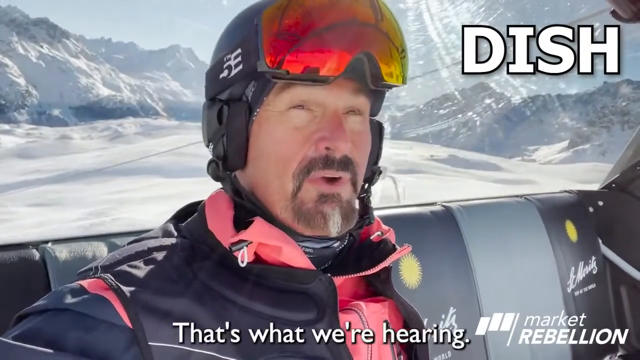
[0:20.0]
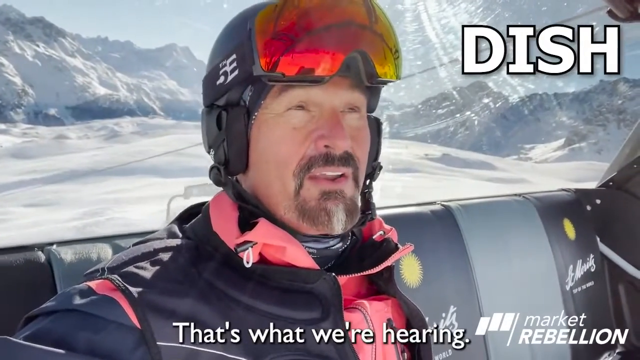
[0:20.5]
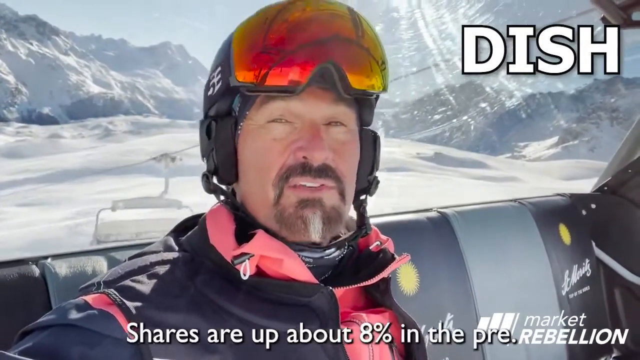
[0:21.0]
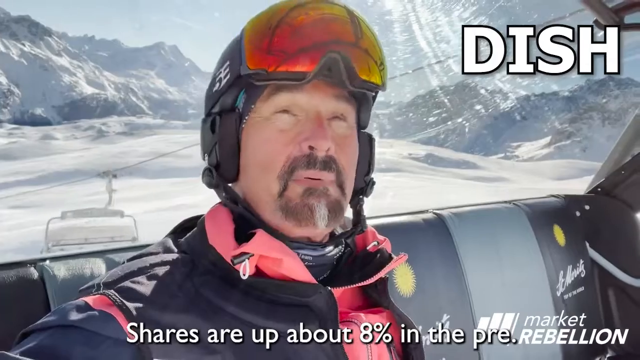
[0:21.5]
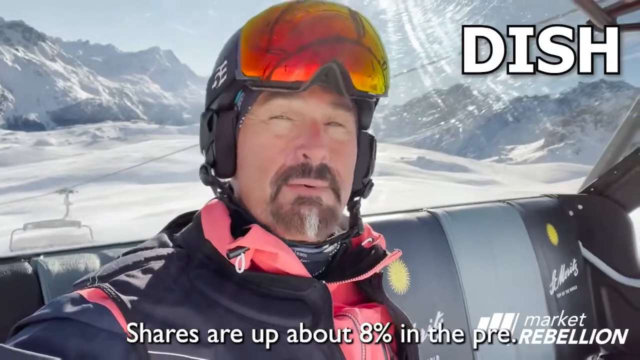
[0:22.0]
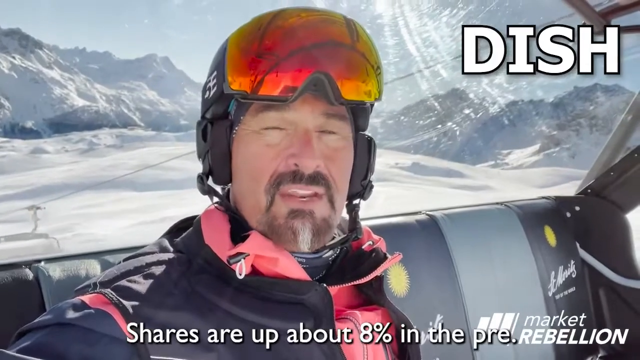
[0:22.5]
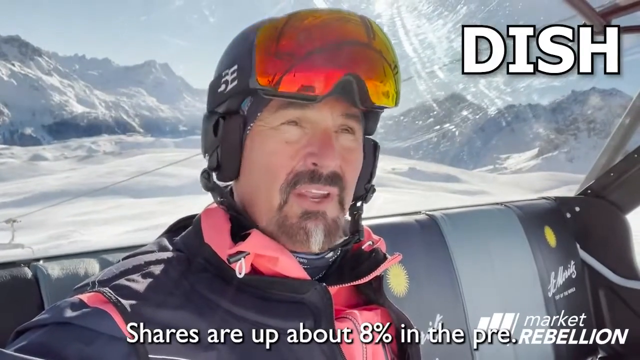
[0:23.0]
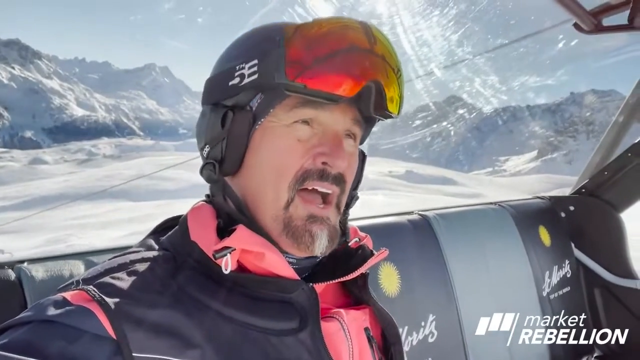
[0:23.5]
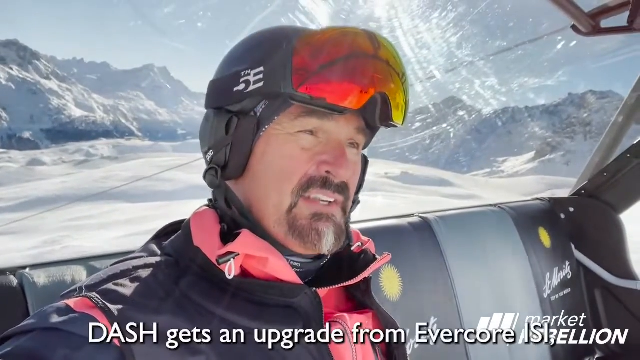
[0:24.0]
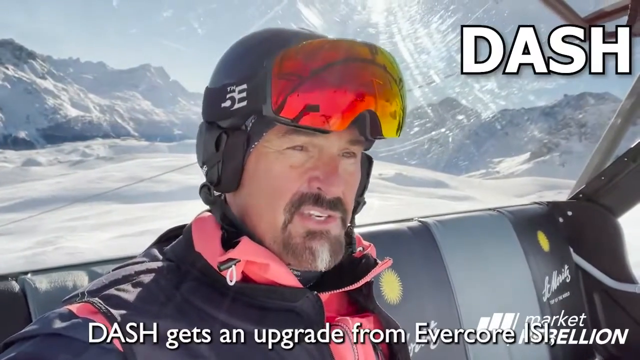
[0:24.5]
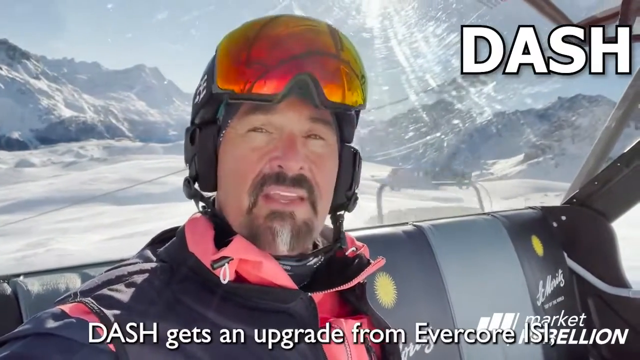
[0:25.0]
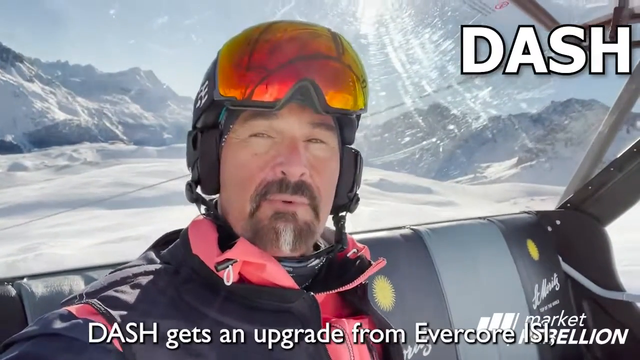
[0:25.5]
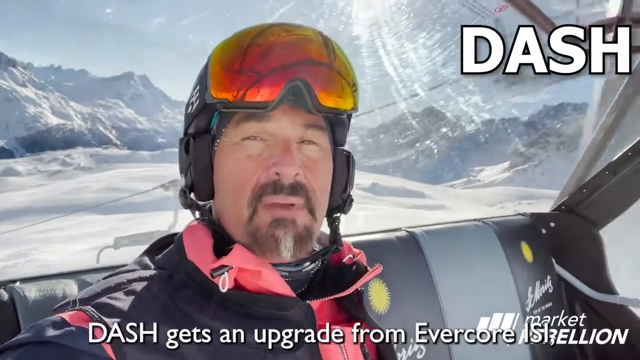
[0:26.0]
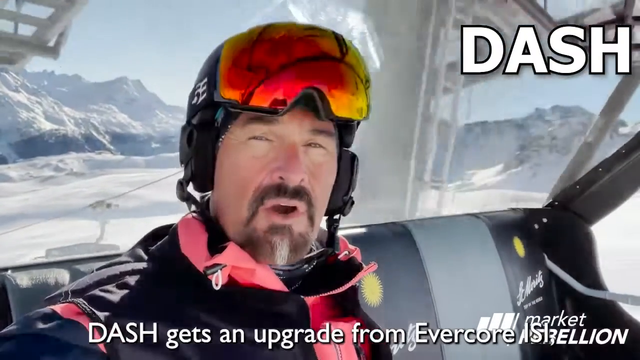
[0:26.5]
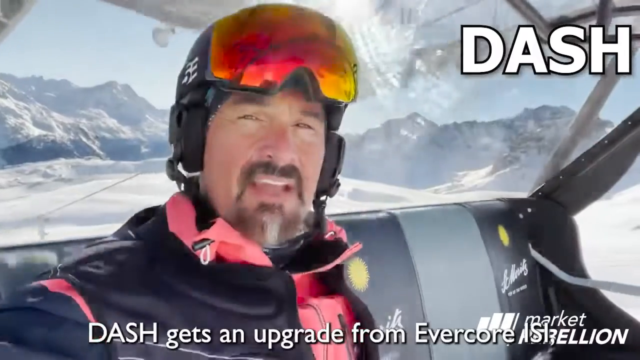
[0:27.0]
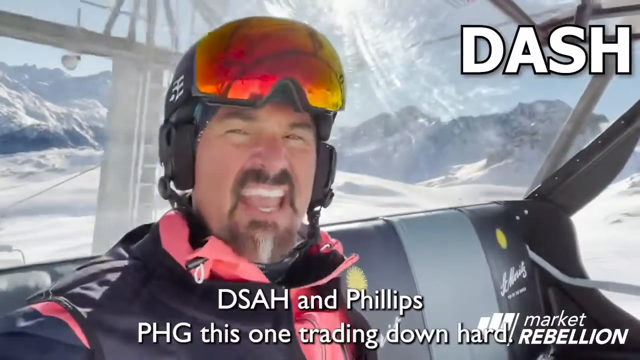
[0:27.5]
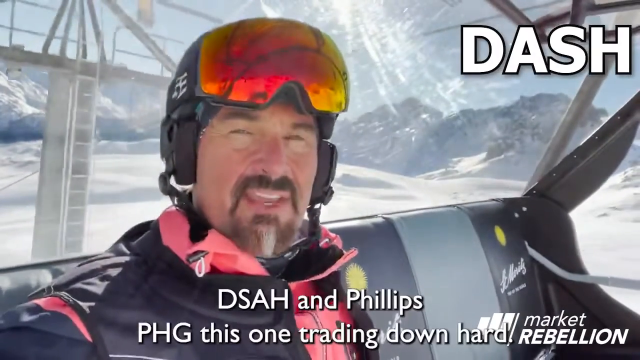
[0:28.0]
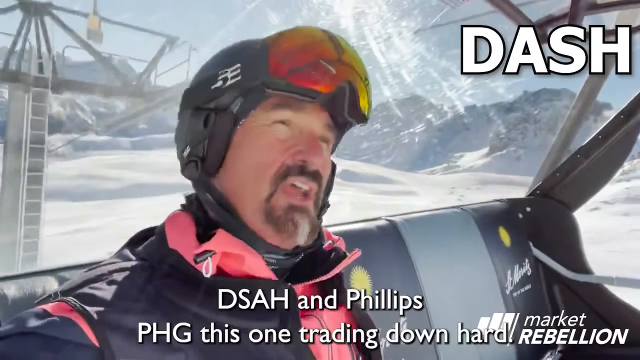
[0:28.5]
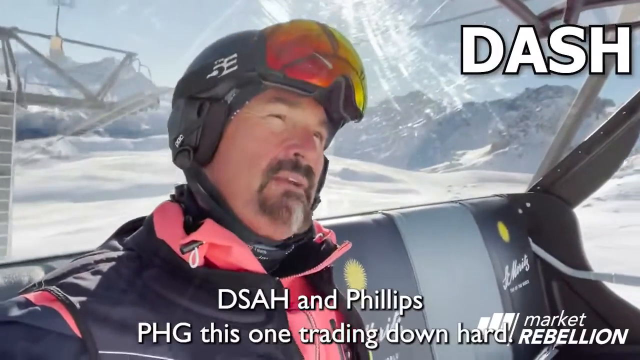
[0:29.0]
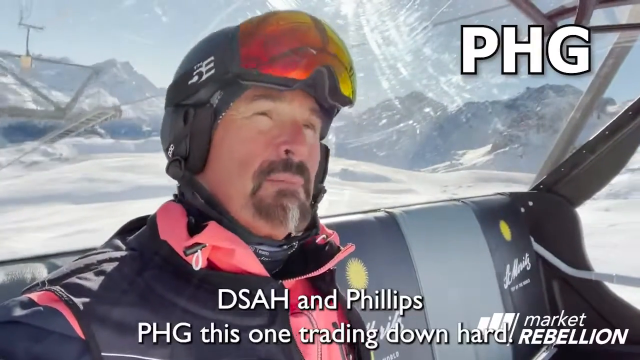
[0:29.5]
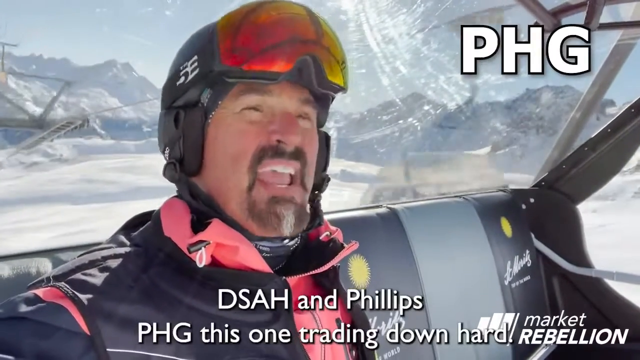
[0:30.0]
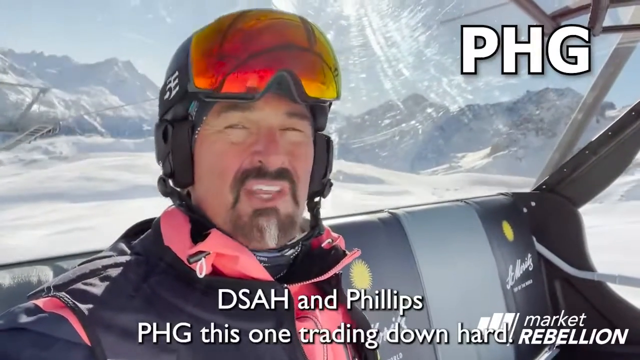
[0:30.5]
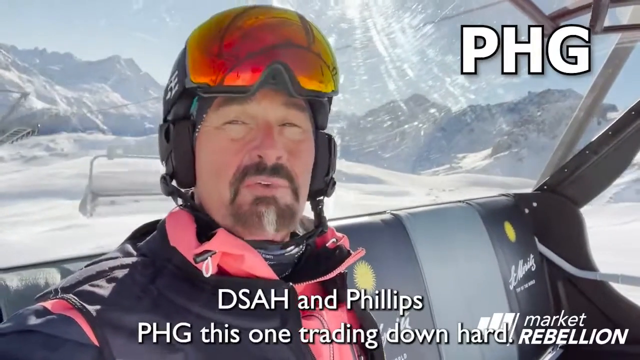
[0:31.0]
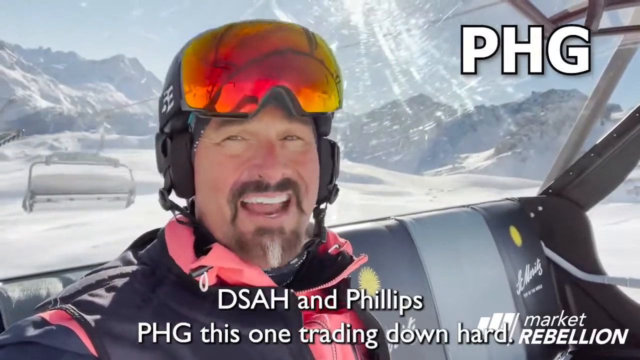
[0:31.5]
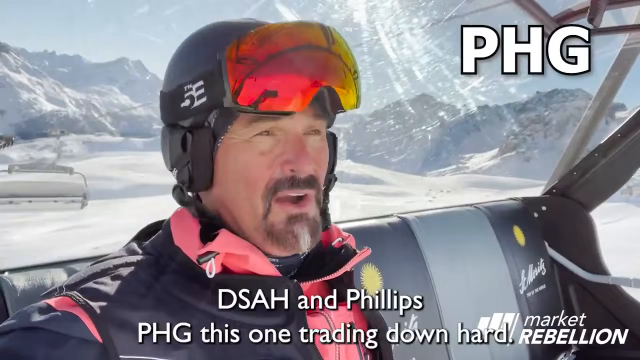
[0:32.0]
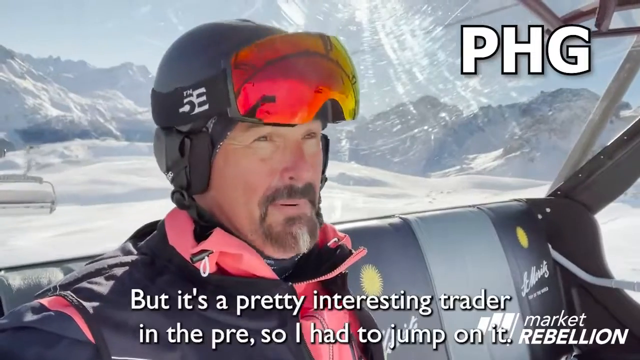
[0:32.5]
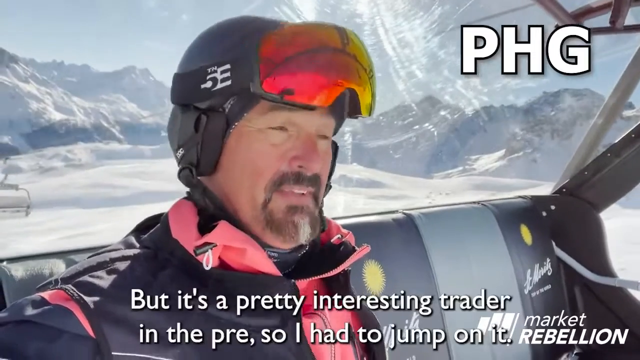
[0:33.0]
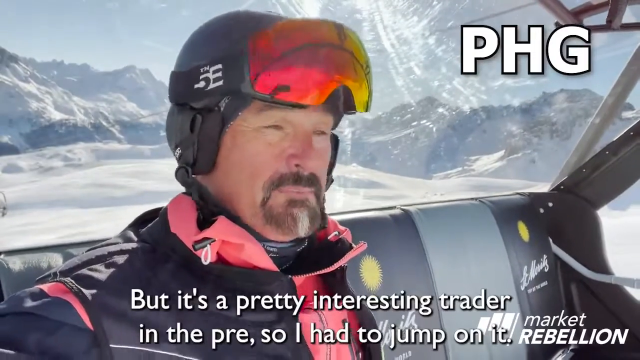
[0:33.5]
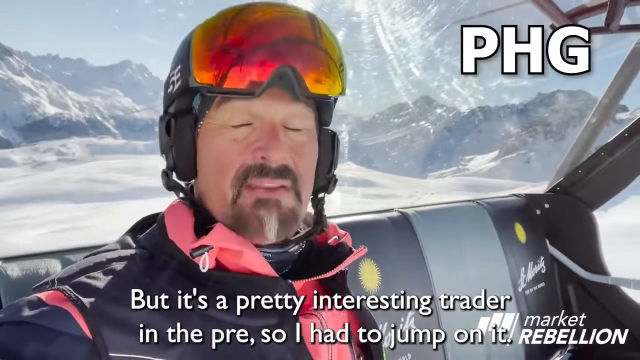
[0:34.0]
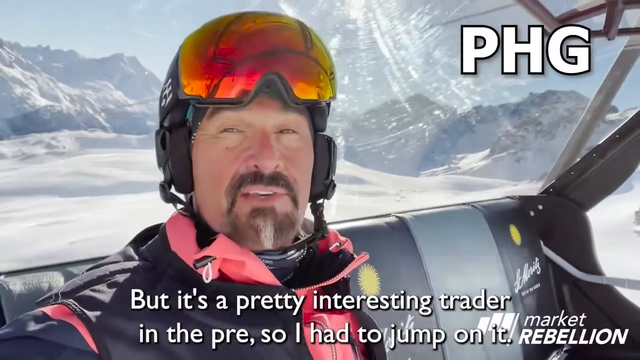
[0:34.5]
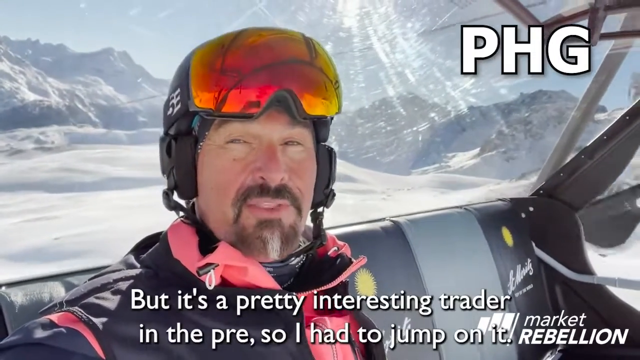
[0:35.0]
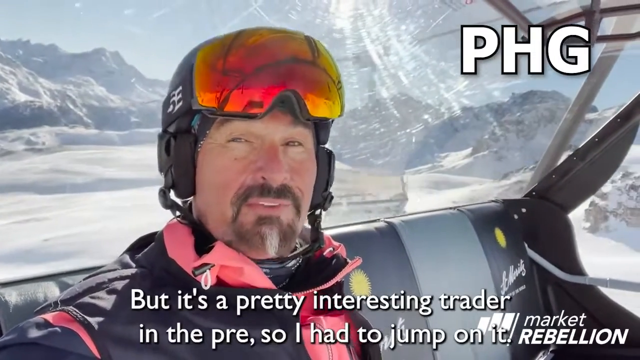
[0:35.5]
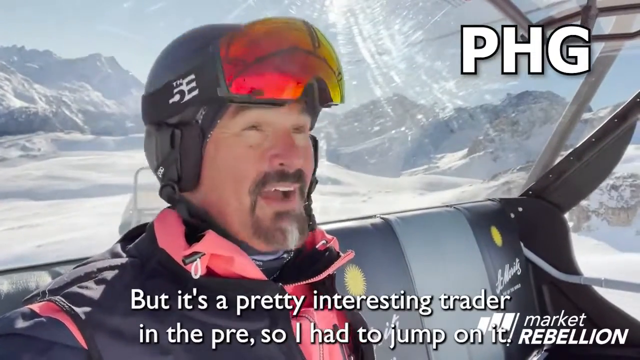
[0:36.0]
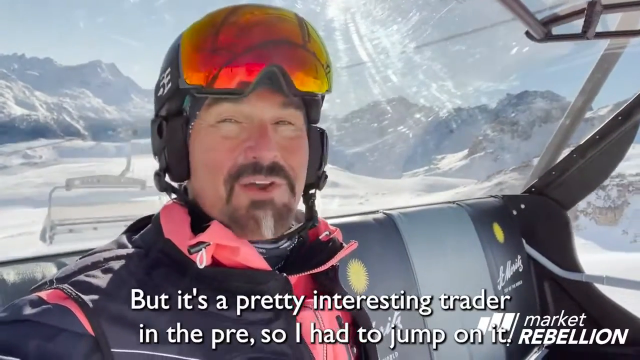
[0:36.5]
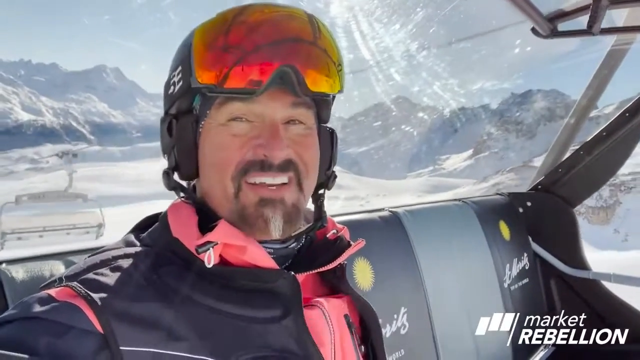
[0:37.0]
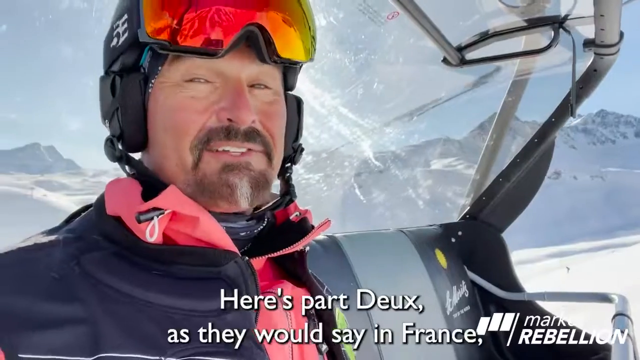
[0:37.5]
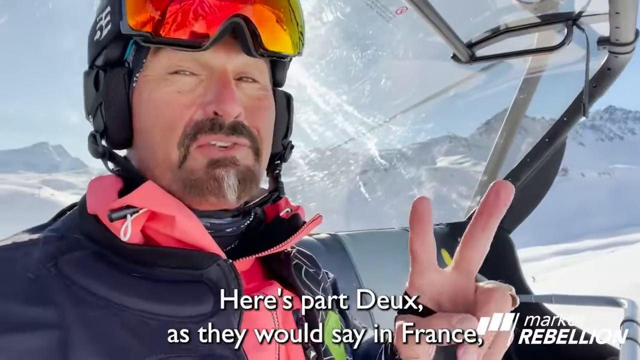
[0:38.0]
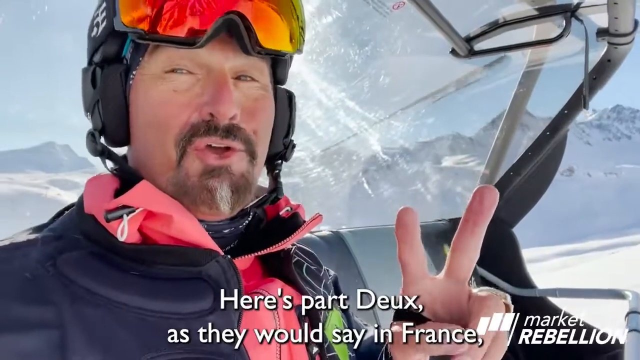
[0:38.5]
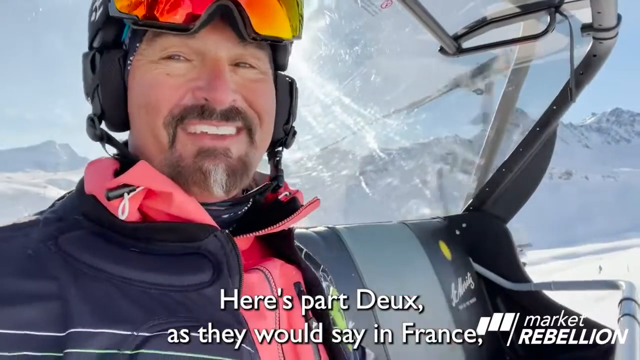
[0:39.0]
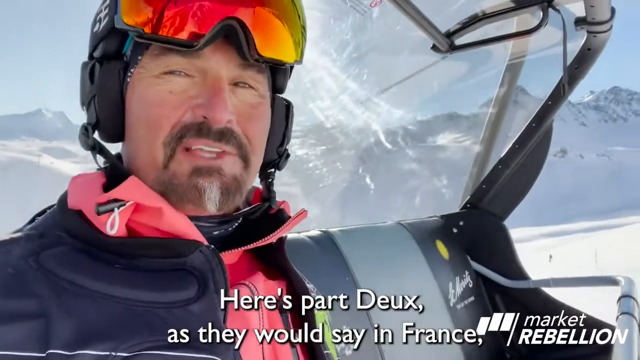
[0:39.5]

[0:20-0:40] The man is on the ski slopes, filming himself in selfie mode. He is a Caucasian man with a nicely trimmed beard and a small white patch along his goatee. On-screen captions refer to stocks, including shares being "up eight percent in the pre", "dash gets an upgrade from evercore", PHG "trading down hard", and "trader in the pre so I had to jump on it". The video is by Market Rebellion. The segment ends with a caption about Germany.